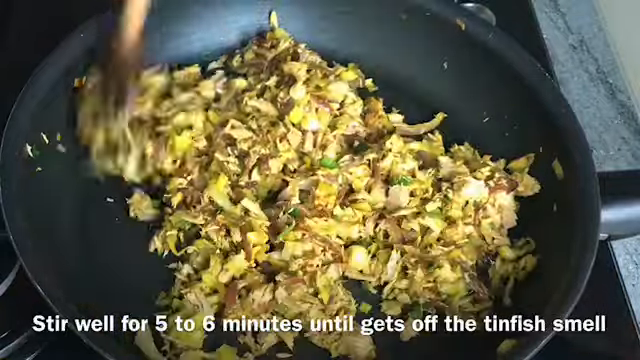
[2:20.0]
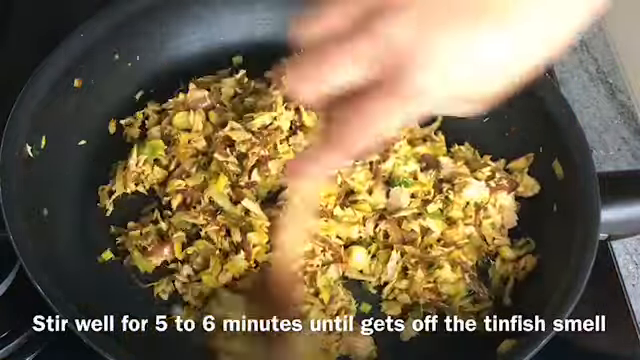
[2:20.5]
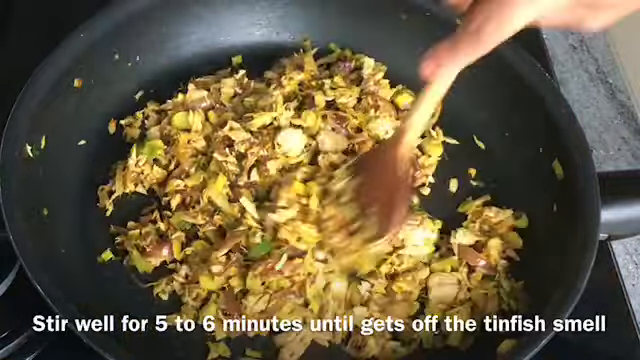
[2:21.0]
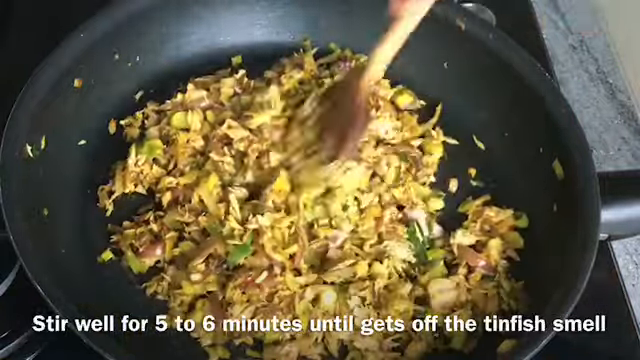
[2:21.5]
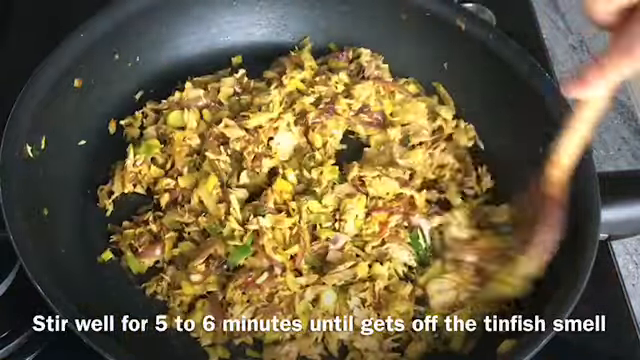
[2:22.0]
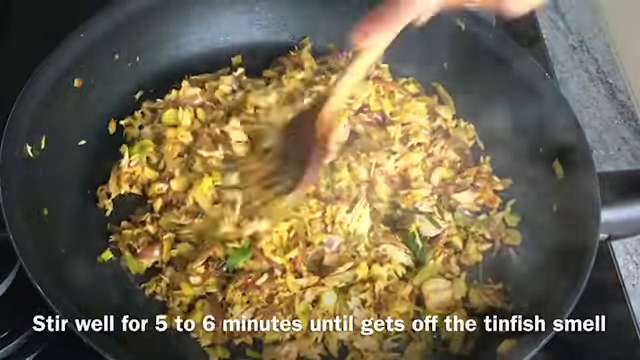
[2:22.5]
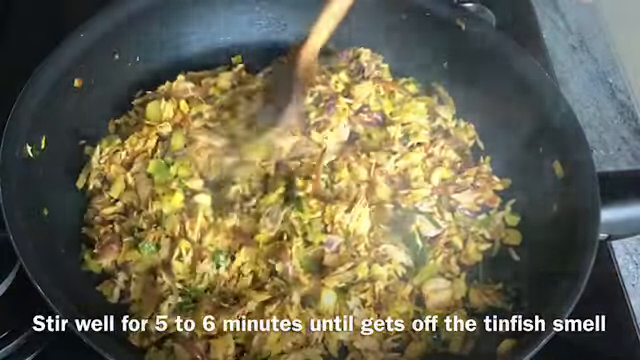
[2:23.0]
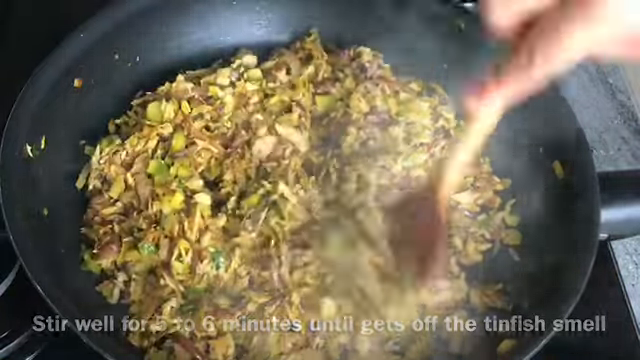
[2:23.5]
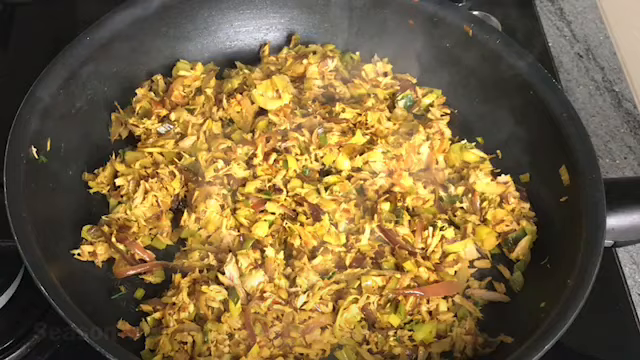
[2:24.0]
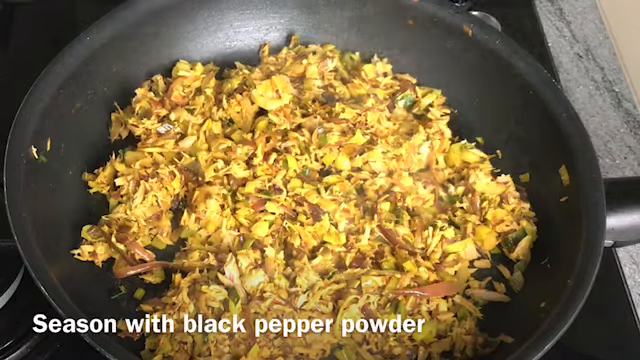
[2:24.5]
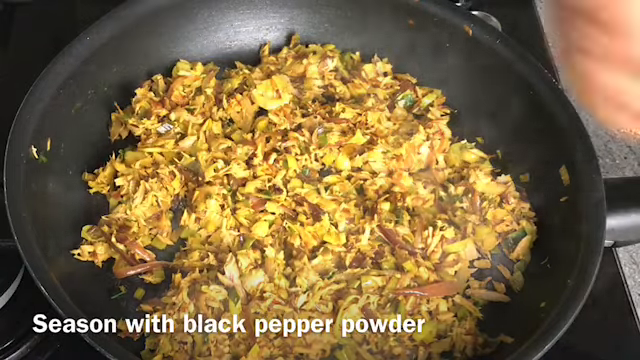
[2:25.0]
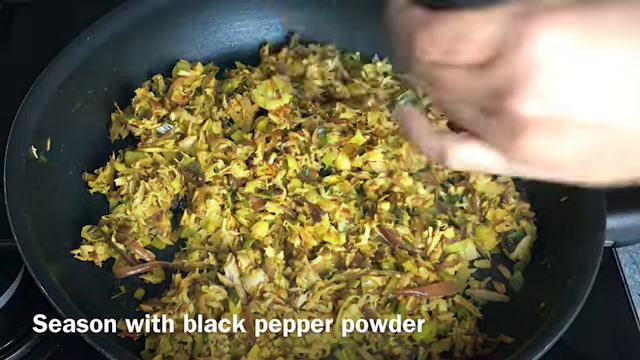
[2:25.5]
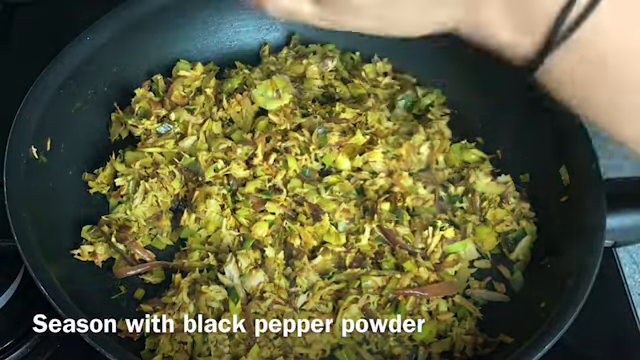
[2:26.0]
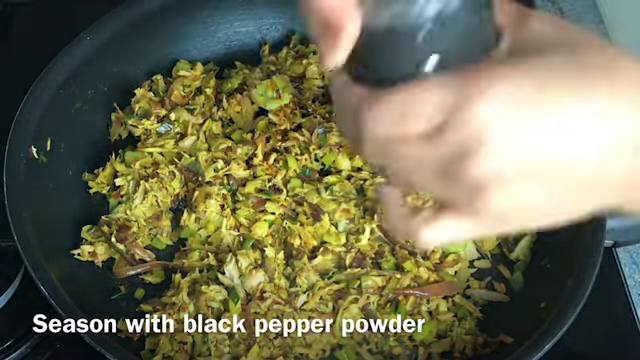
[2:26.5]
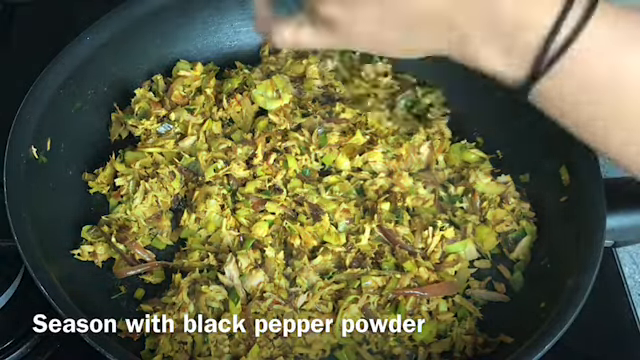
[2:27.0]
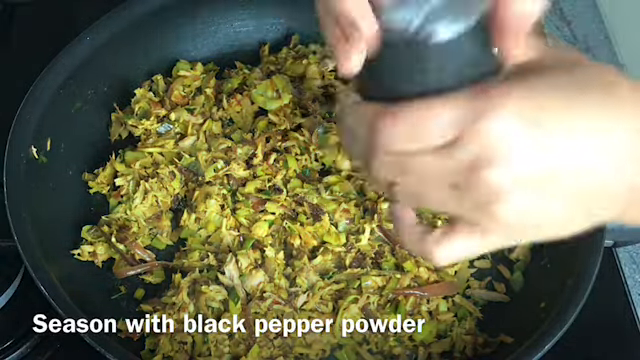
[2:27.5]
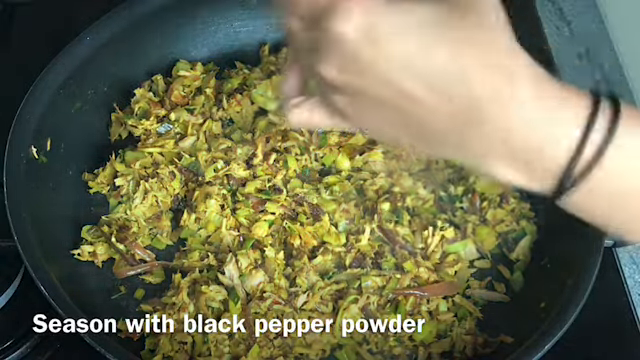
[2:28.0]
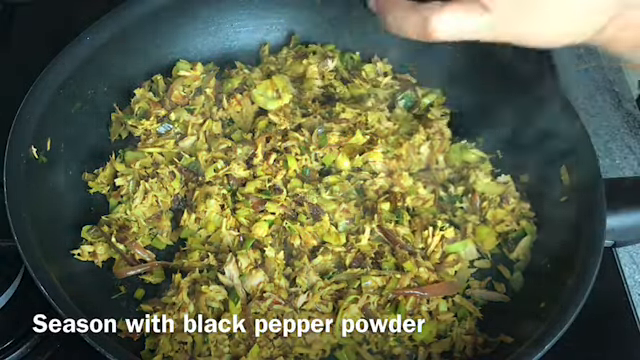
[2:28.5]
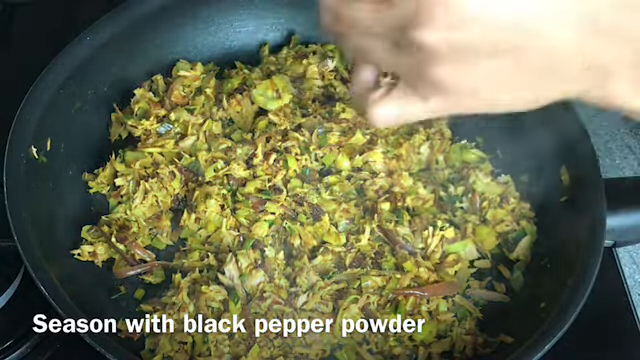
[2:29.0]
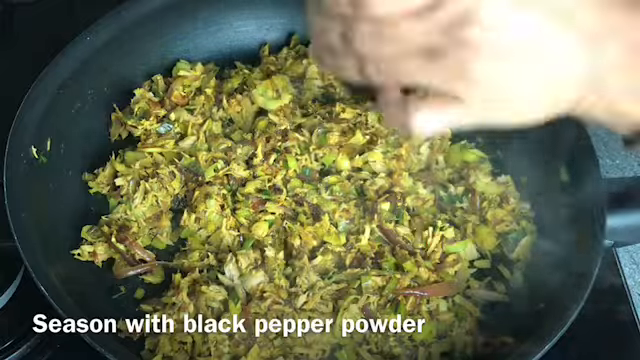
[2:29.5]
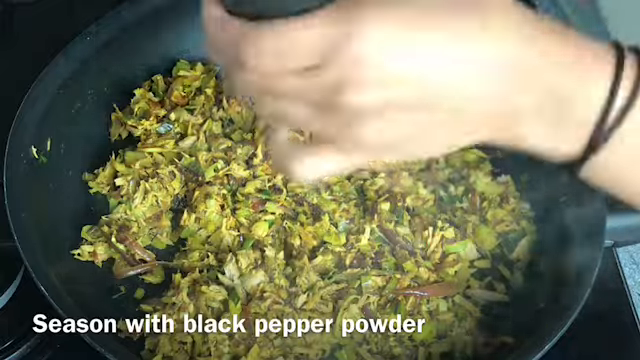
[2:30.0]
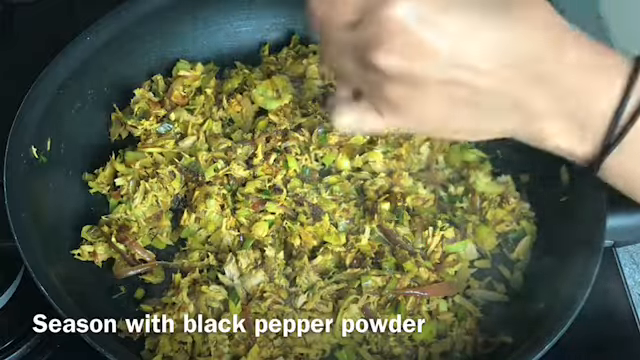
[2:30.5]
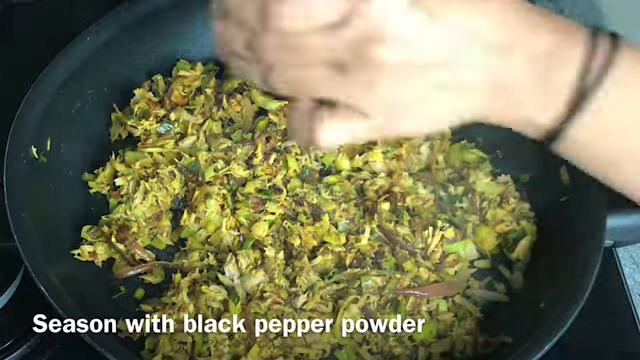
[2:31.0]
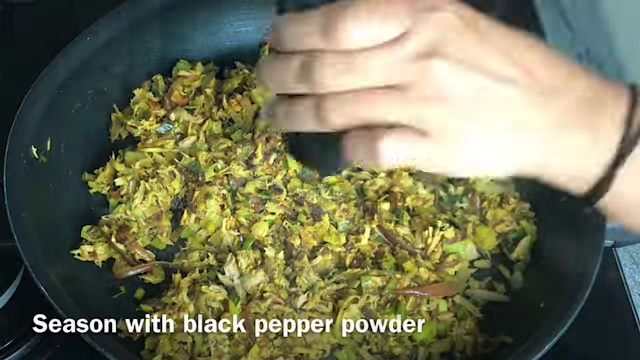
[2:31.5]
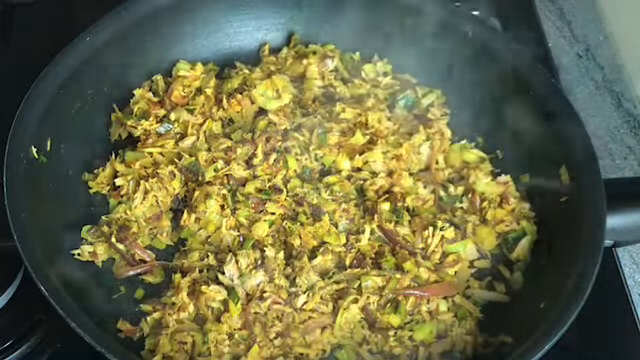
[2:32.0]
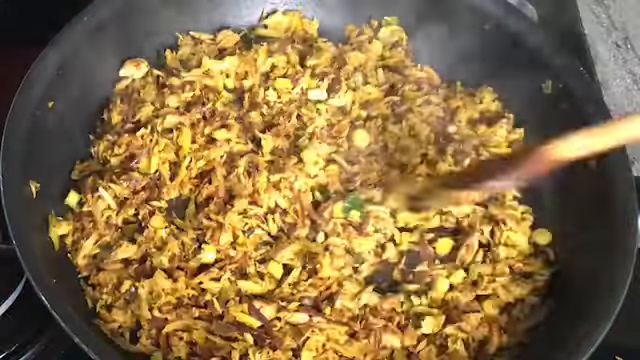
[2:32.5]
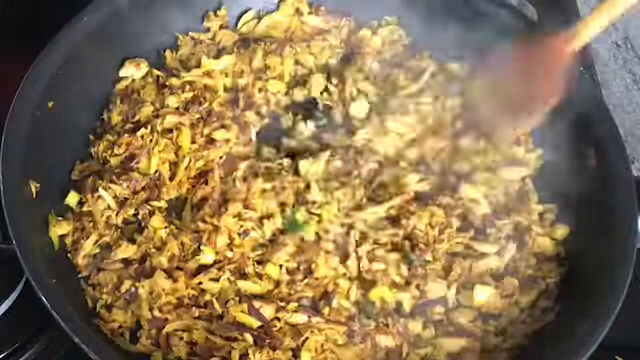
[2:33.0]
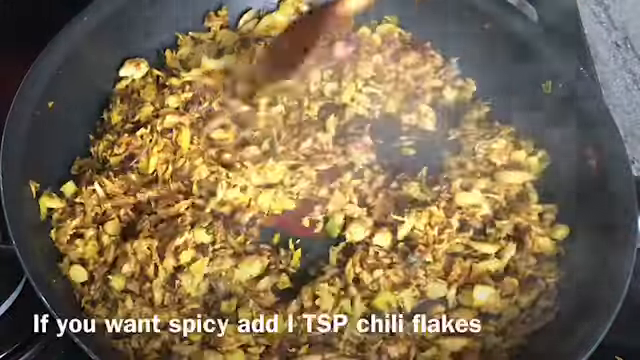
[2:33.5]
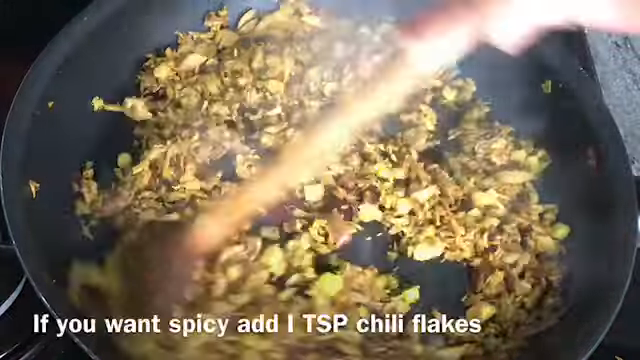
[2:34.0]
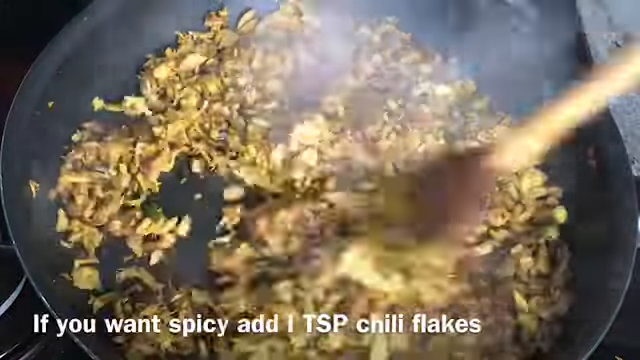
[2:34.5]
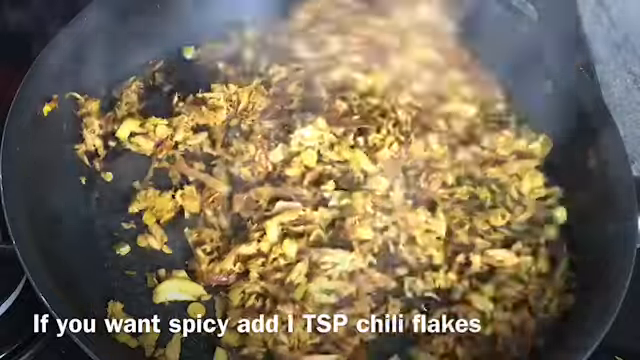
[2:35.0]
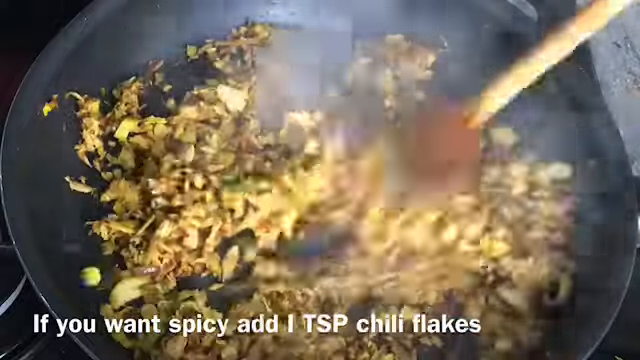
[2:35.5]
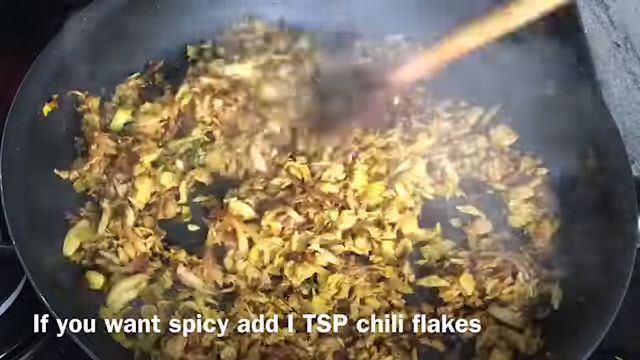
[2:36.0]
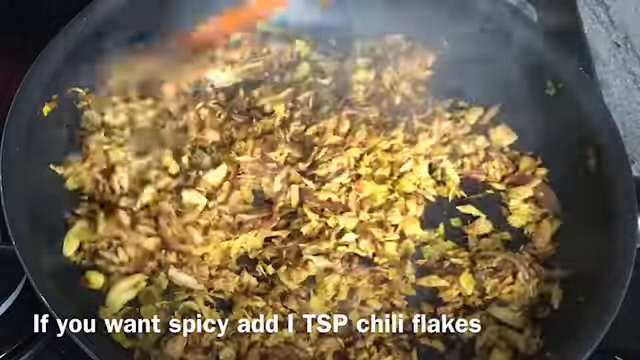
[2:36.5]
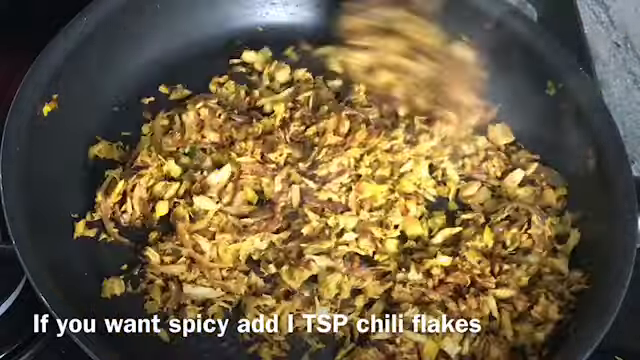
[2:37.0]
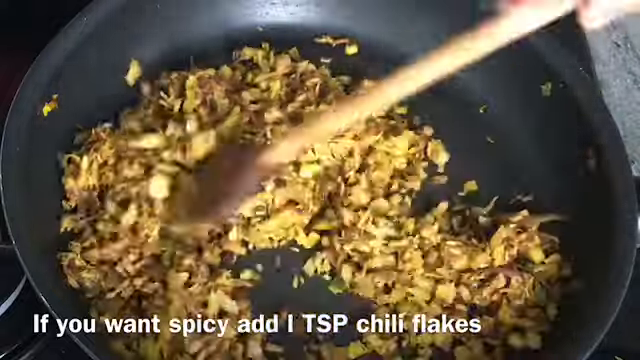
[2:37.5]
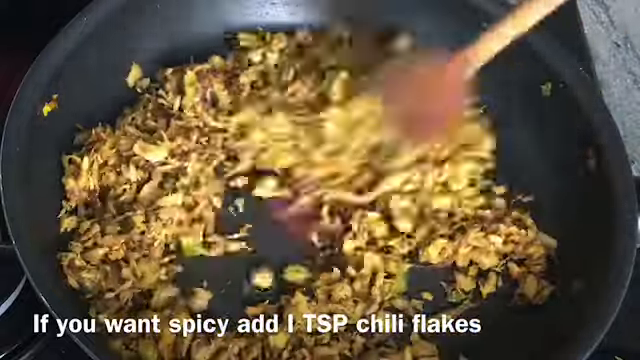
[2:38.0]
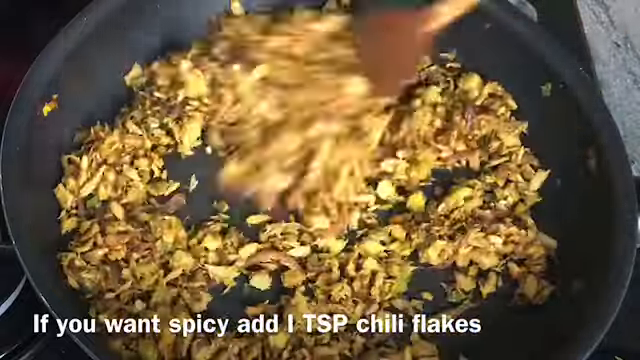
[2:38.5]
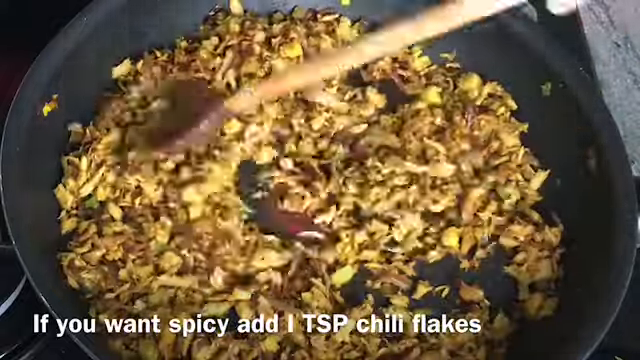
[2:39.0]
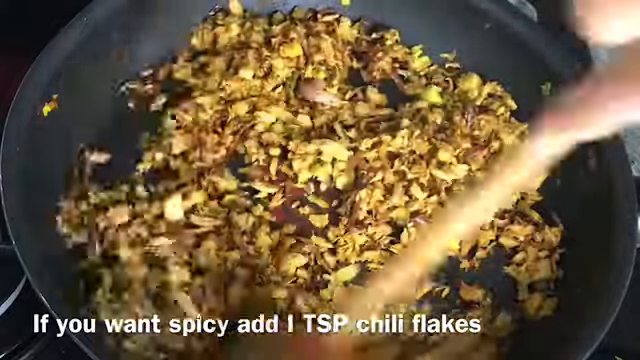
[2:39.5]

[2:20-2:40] The ingredients are still being stirred, and the wooden spoon taps the top, flattening everything down a little. Text reads "Season with black pepper powder", and a pepper grinder is used all over the food in the frying pan, which is then stirred more with the wooden spoon. Text says "If you want spicy, add one teaspoon chili flakes", but the chili flakes are not seen being added. The hands are pale, with maybe a black bracelet or hair tie on the left wrist. The food looks a little more brown than before. The light shifts slightly, looking a little green for a moment, when the hands come into frame. It is the same pan on the same stove, apparently not moved from the burner, and there is a little less steam, possibly because the heat was lowered.